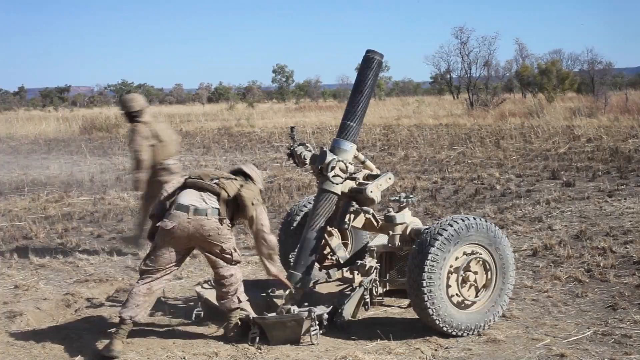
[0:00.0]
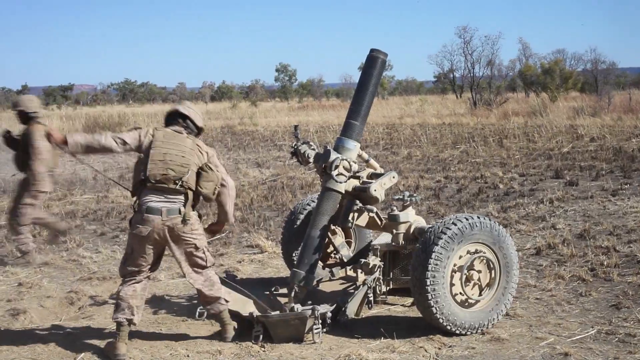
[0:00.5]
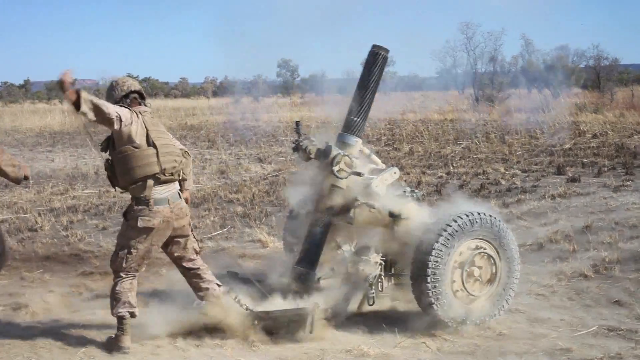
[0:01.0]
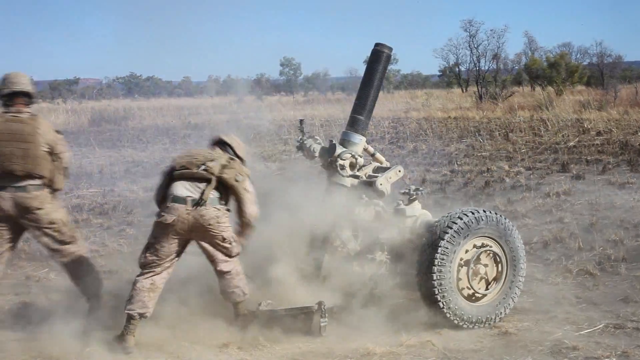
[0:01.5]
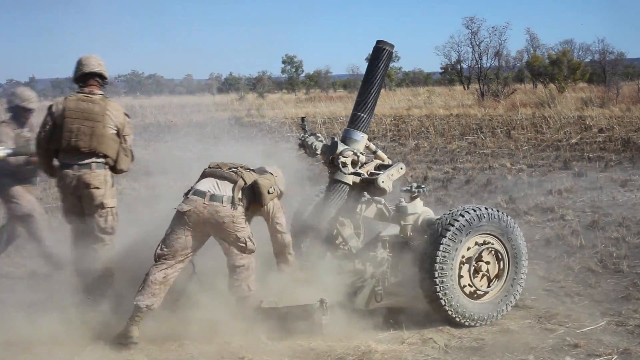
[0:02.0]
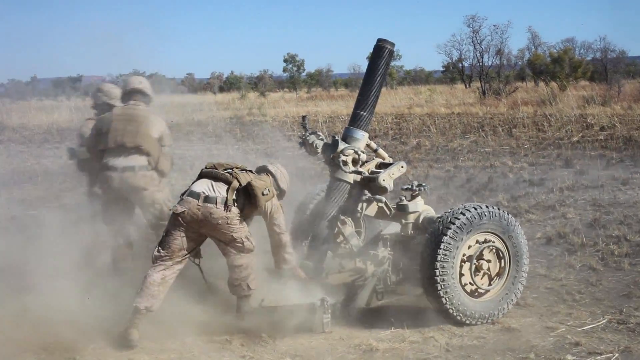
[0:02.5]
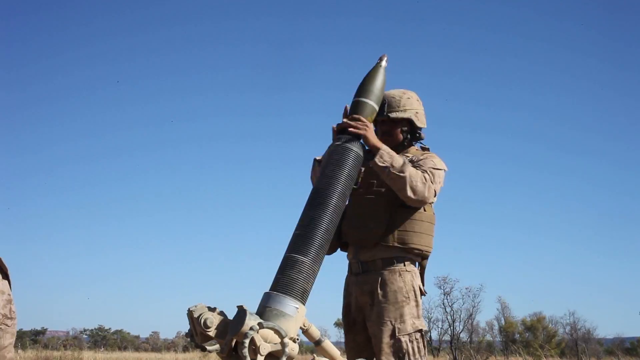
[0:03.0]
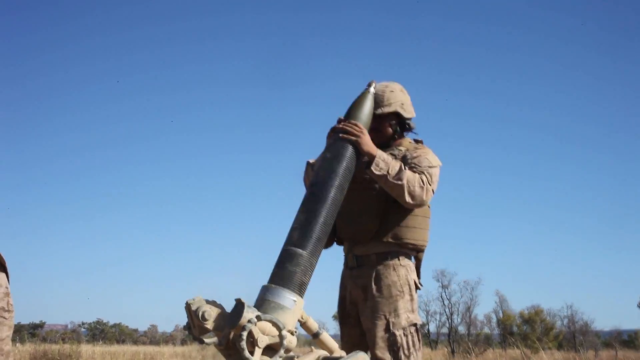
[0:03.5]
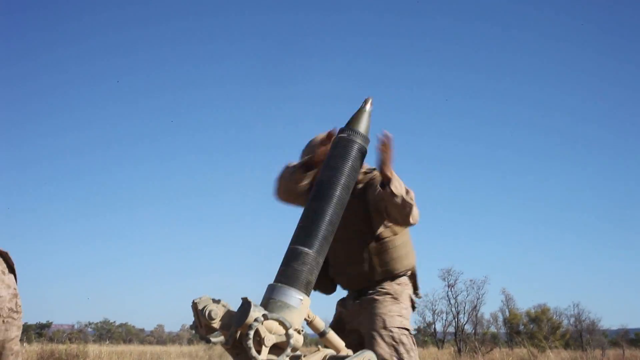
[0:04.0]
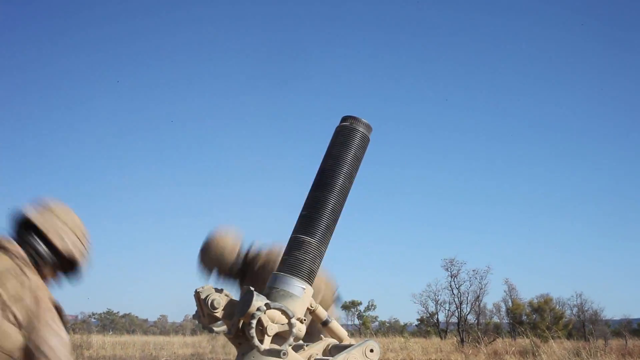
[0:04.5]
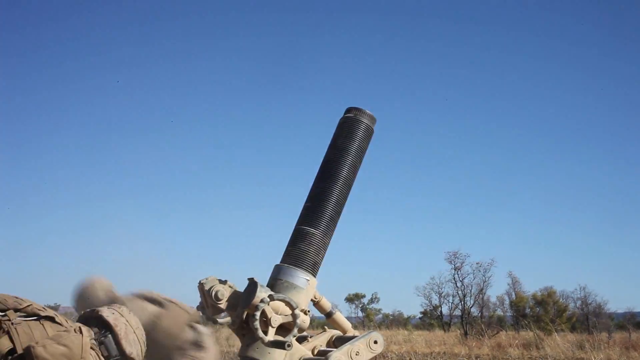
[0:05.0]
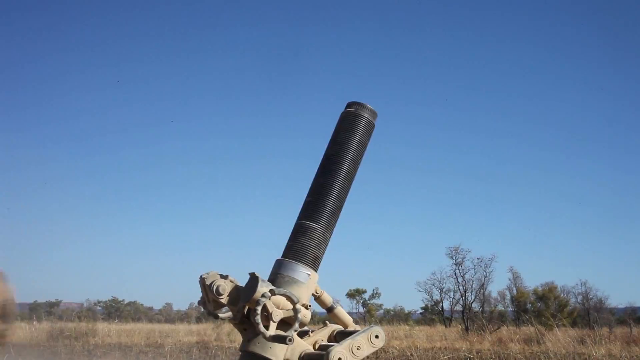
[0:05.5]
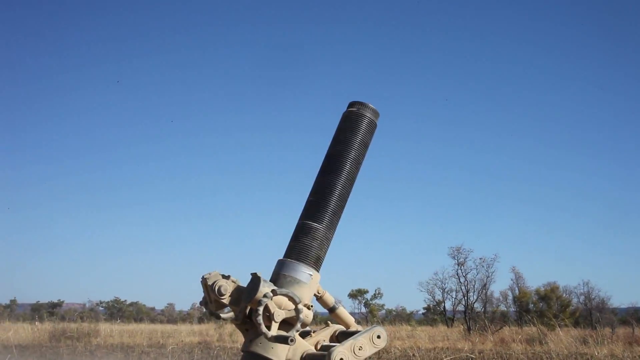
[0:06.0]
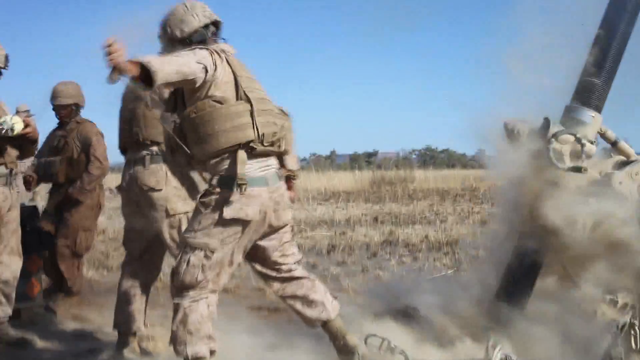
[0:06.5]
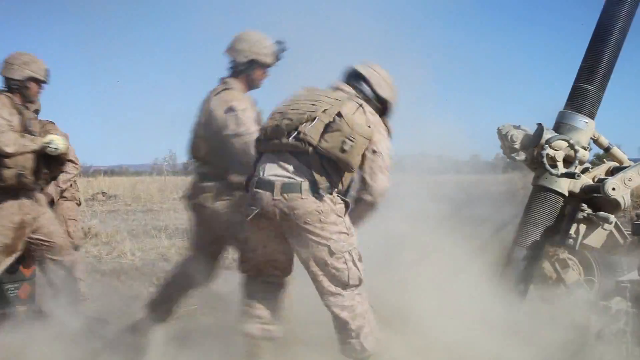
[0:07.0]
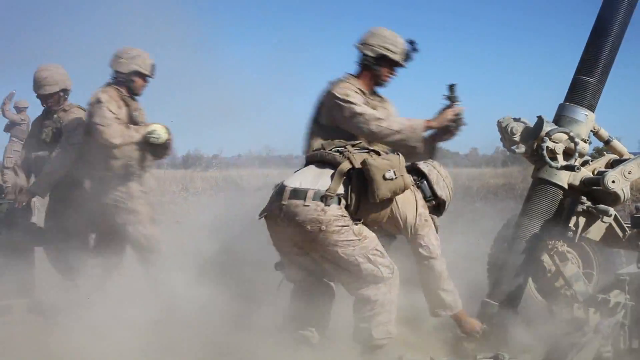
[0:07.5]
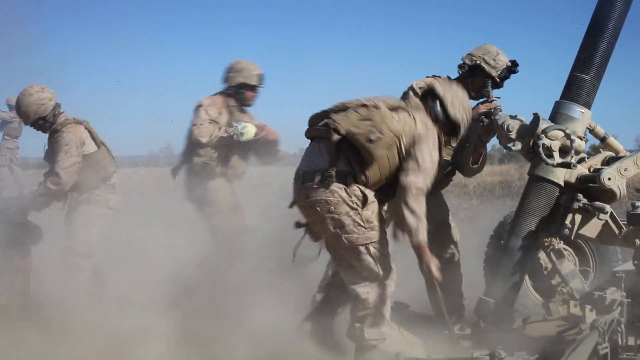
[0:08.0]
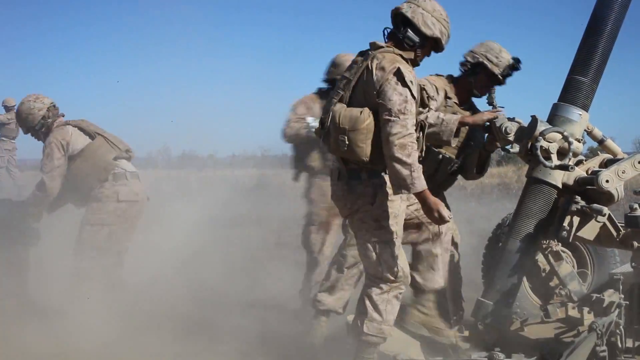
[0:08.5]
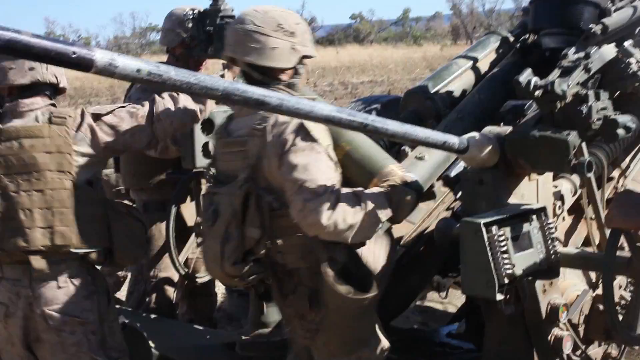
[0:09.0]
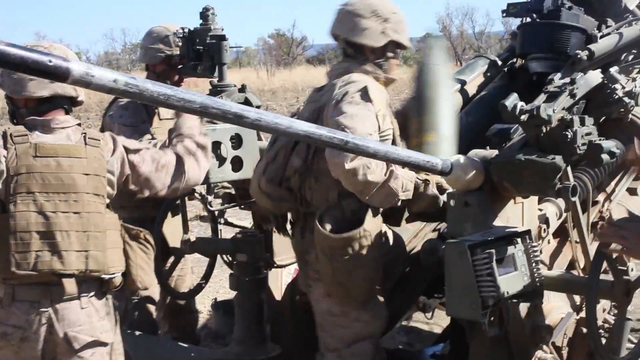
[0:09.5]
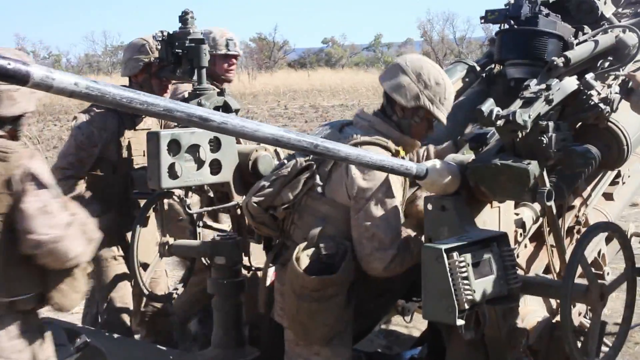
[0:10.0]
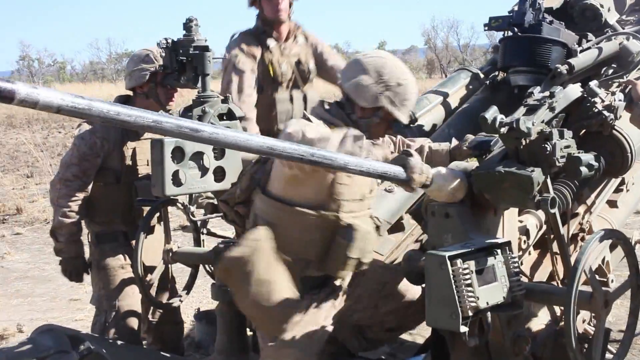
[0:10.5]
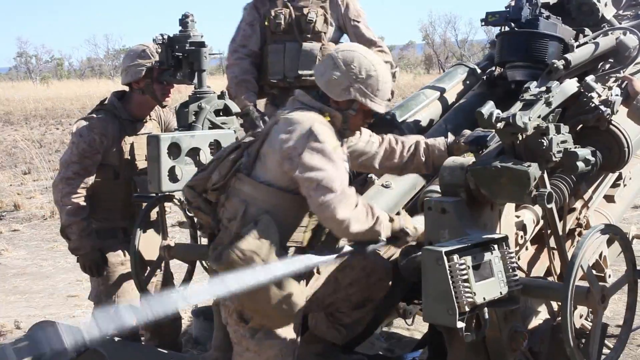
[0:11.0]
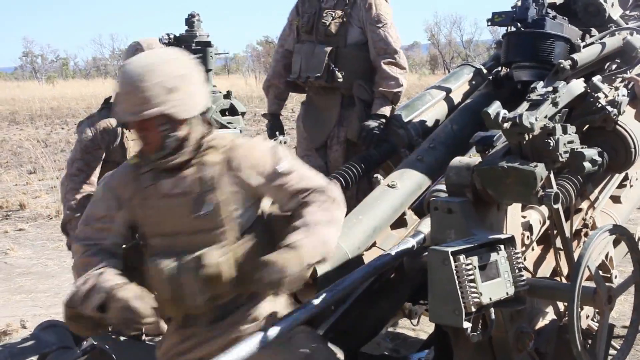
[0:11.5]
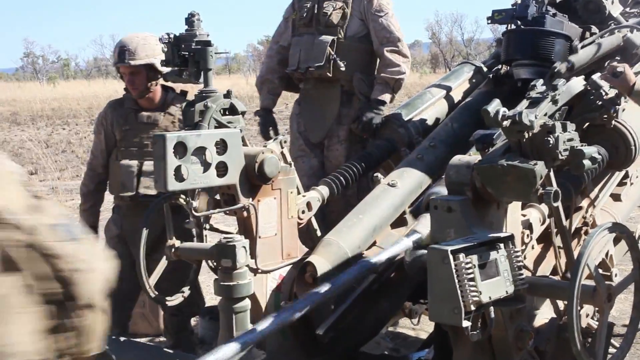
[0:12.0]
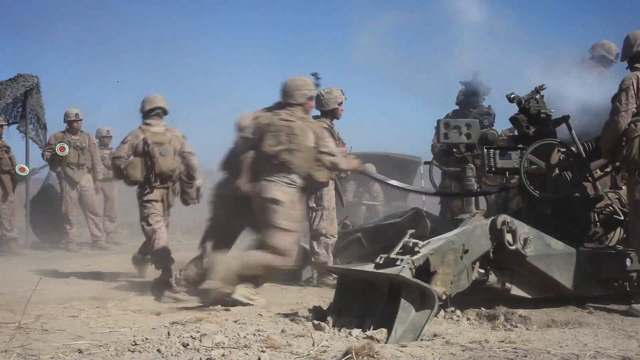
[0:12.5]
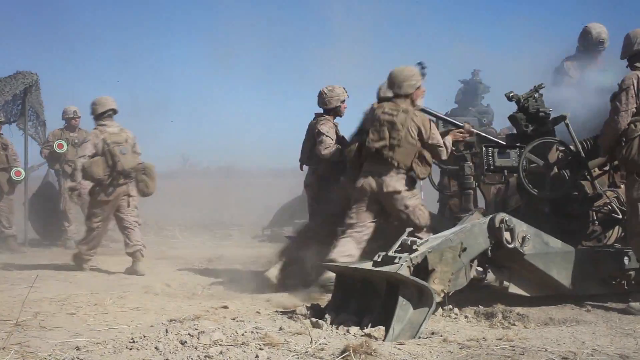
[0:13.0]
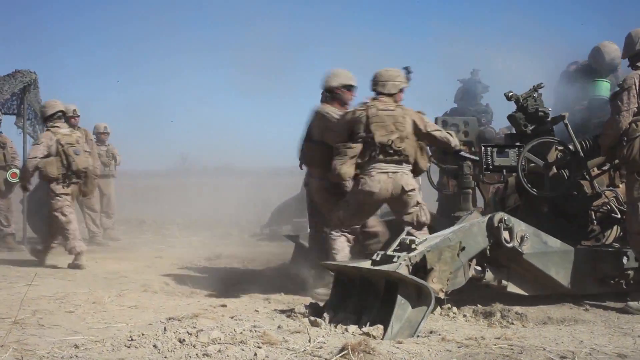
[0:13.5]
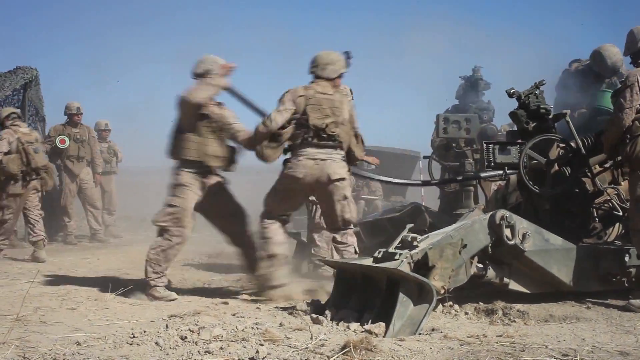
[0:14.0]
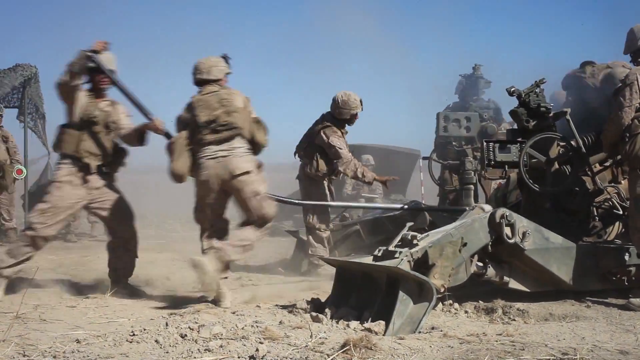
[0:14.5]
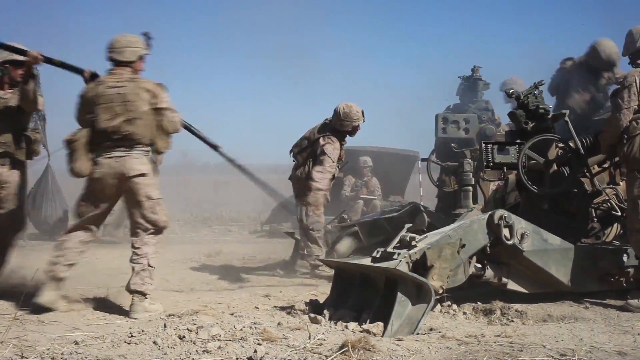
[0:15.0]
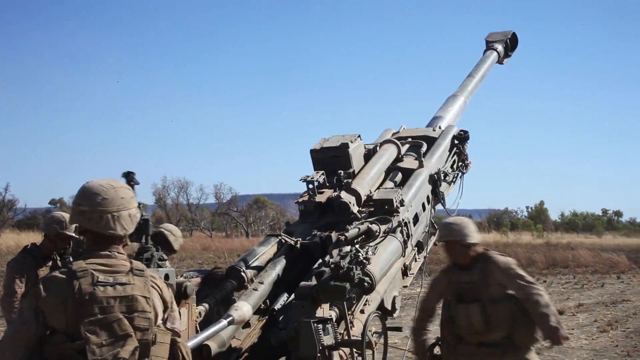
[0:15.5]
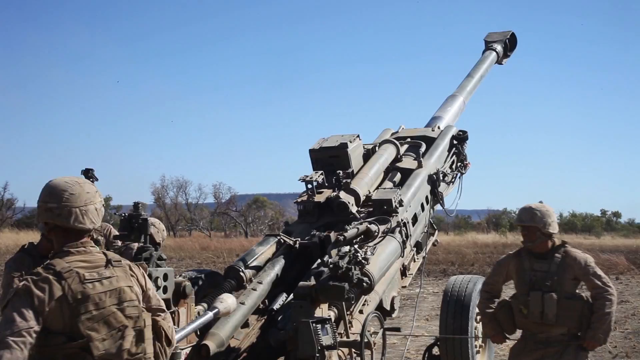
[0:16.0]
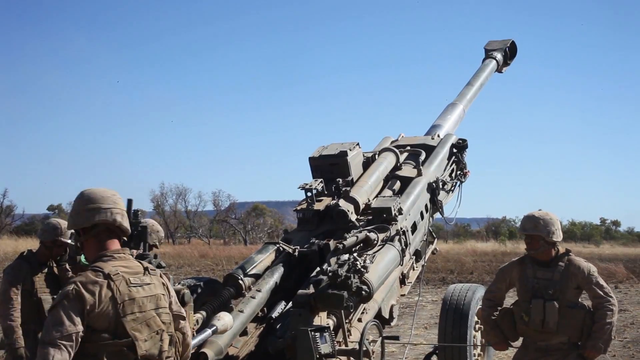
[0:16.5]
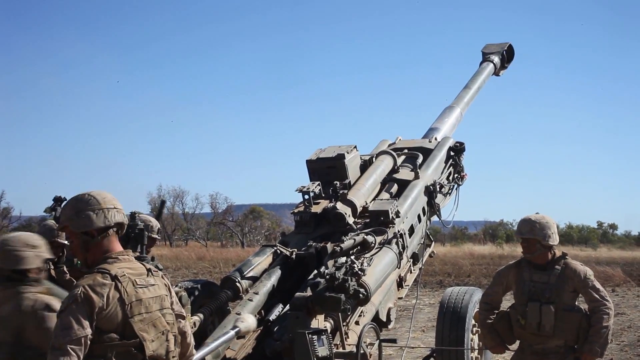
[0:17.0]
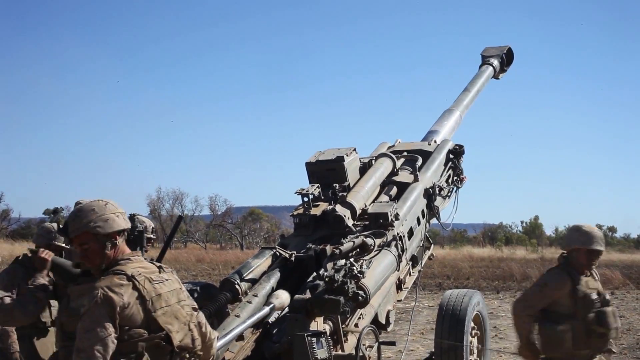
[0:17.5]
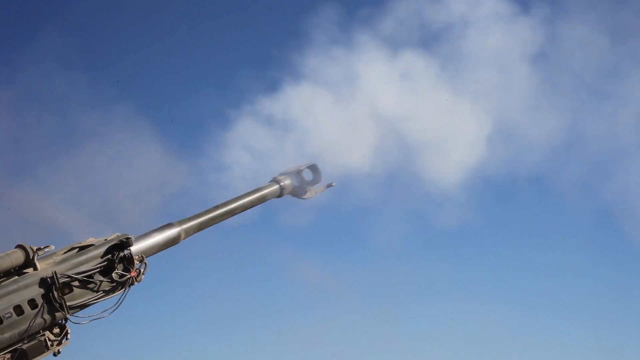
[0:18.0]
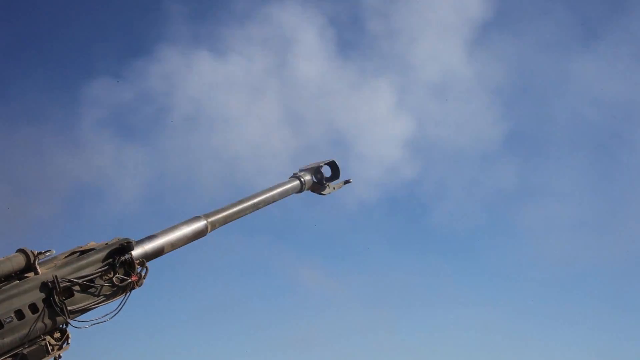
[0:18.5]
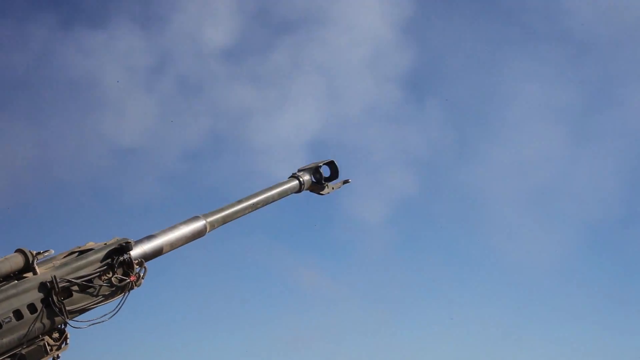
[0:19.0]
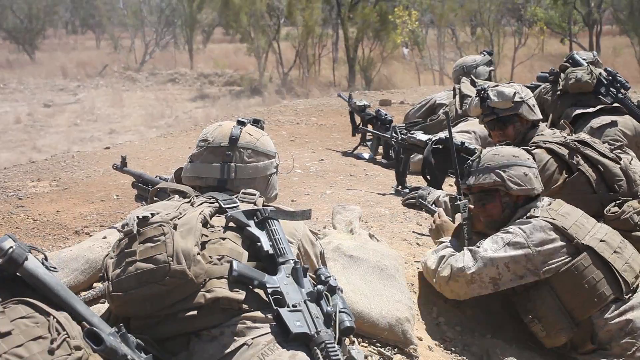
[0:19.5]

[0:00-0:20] Two soldiers in tannish camouflage uniforms seem to be servicing a large mortar artillery piece. One soldier runs to the left of the screen and grabs something off screen, and another runs in from the left side and grabs what that soldier grabbed, which is another shell. Meanwhile, a third soldier remains mostly stationary and uses his left hand to pull backwards on a rope, firing the mortar artillery piece. The footage cuts to a soldier holding a large mortar shell hanging above the tube. With both hands he drops the shell into the tube and runs to the left, while another soldier adjusts the end of the tube and pulls a string, firing the mortar. The angle cuts to the soldiers firing mortar shells into the tube and the soldier pulling the string. One soldier pulls out an eyepiece and seems to be adjusting the sides of the mortar. The scene changes to a different, larger and longer artillery piece. It is loaded from the breach with a large curved ramming rod, which two soldiers grab by the end and push forward. Multiple other soldiers are standing around, seemingly observing the process of preparing the artillery piece for firing. The artillery piece then fires.